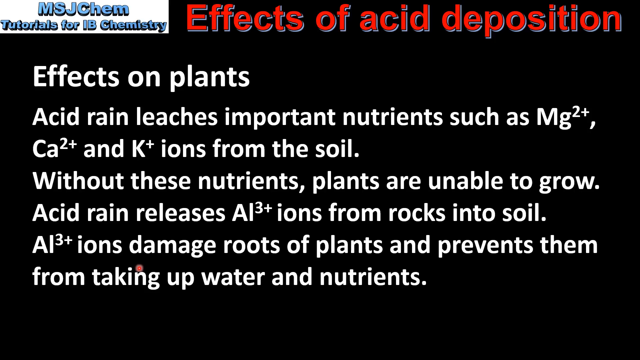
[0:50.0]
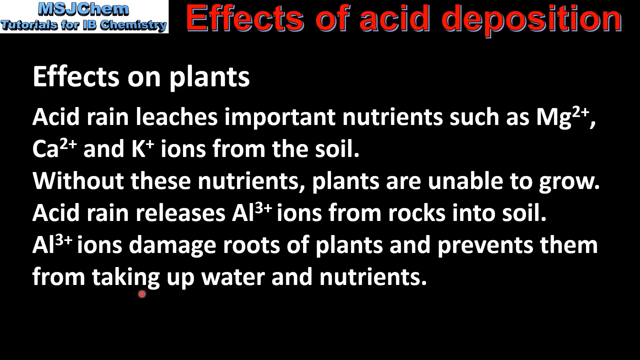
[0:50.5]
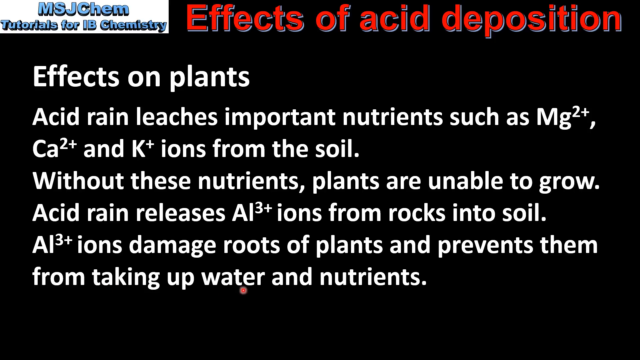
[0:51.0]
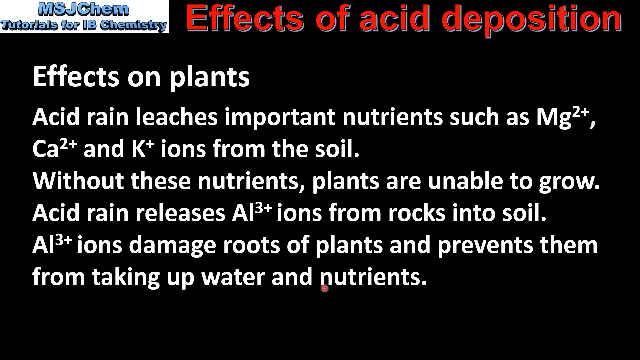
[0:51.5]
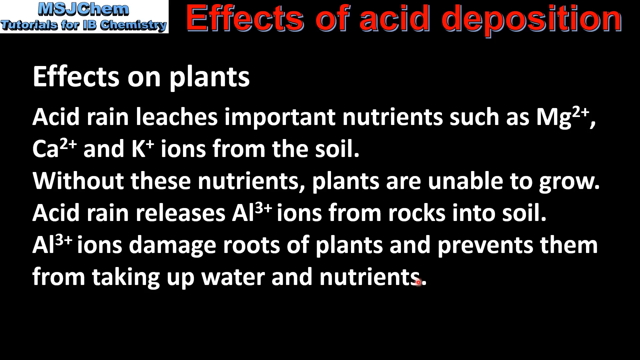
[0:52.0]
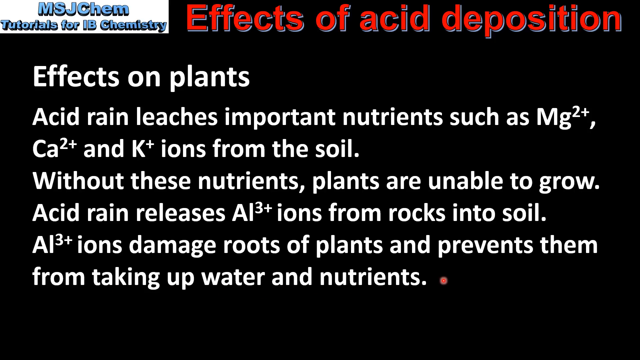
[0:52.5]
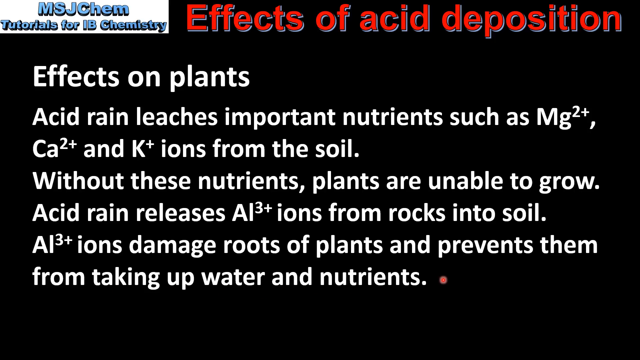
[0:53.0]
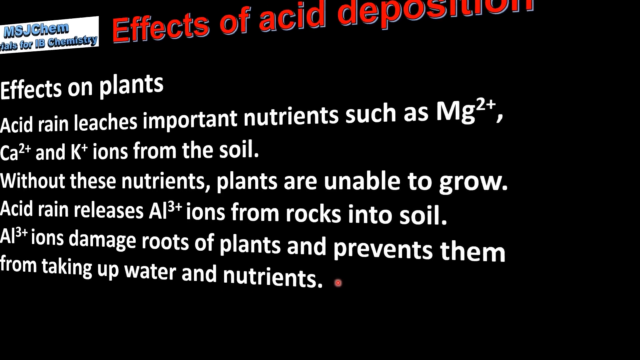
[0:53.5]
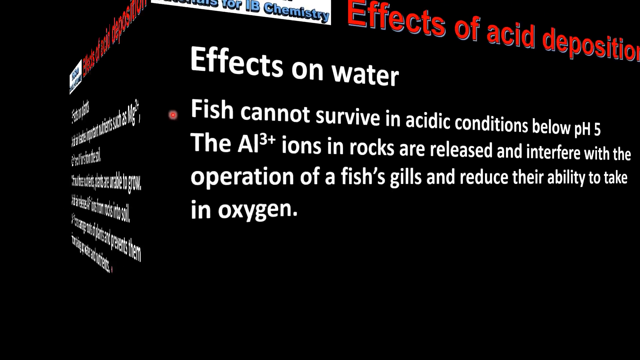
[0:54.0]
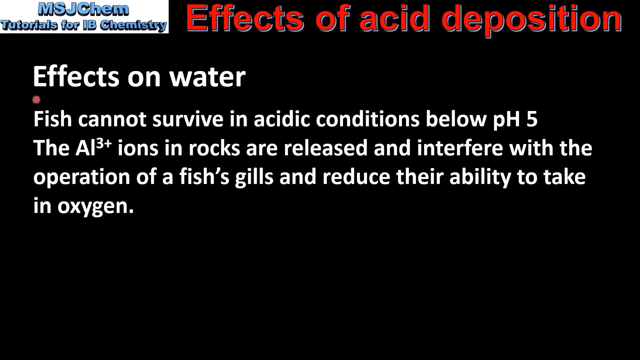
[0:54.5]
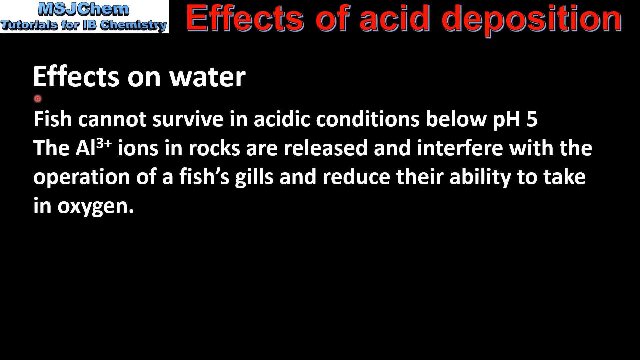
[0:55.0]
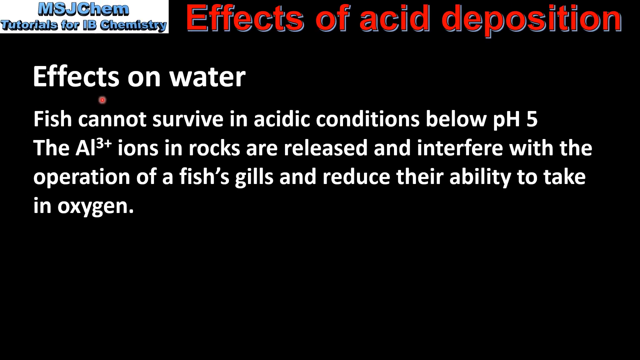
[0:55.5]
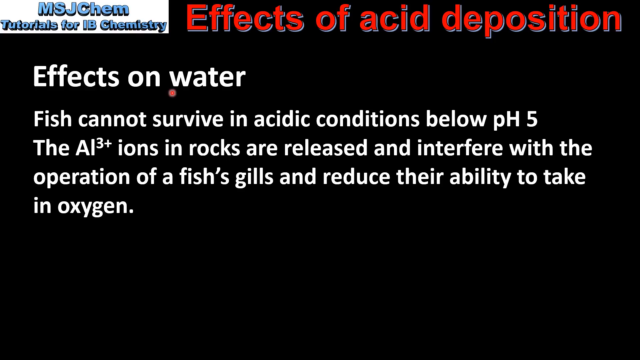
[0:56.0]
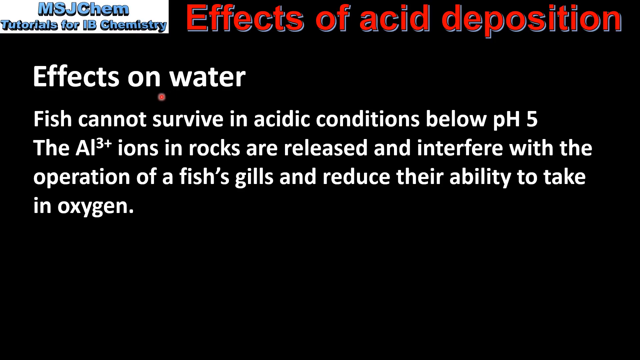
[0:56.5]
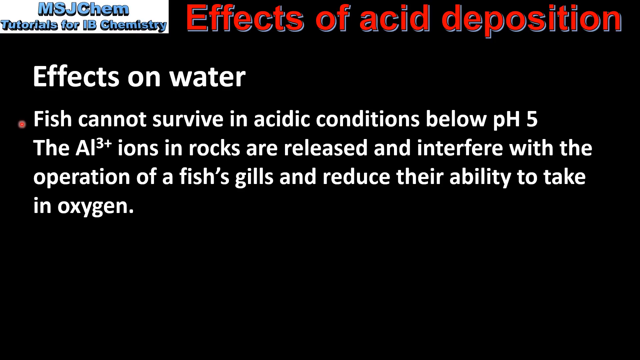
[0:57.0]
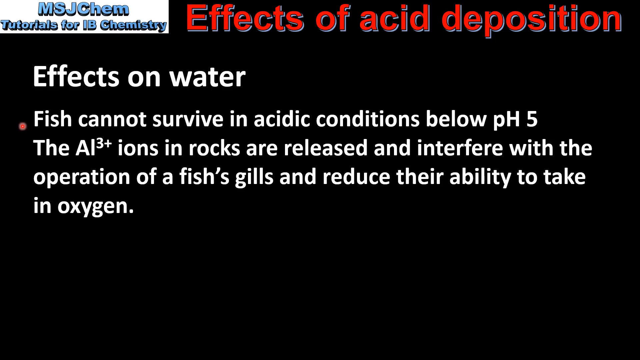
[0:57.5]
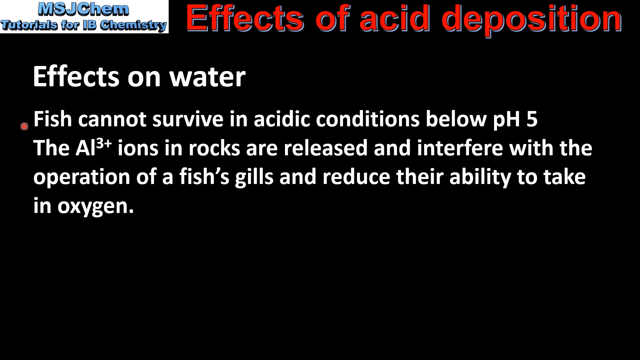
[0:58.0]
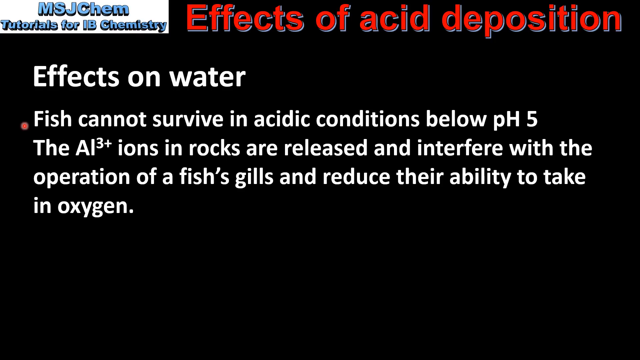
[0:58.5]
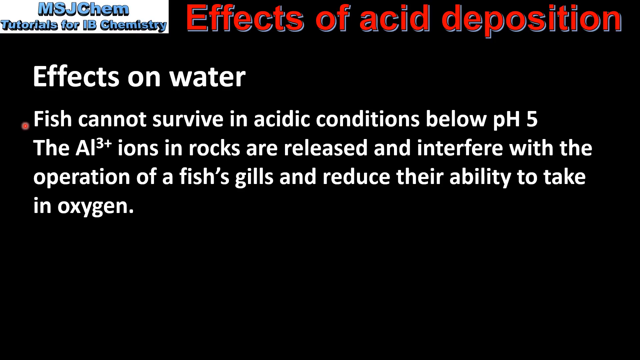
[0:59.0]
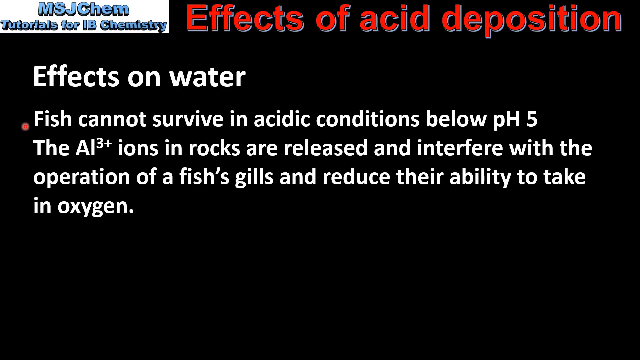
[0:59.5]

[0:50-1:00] The presenter finishes reading the end of the effects on plants slide, and the presentation transitions to a new slide with the same header, "effects of acid deposition." Instead of effects on plants, this slide reads "effects on water" and "fish cannot survive in acidic conditions below pH 5. The AI3+ ions in rocks are released and interfere with the operation of a fish's gills and reduce their ability to take in oxygen." The presenter moves the cursor along the words as if reading them to keep his place.